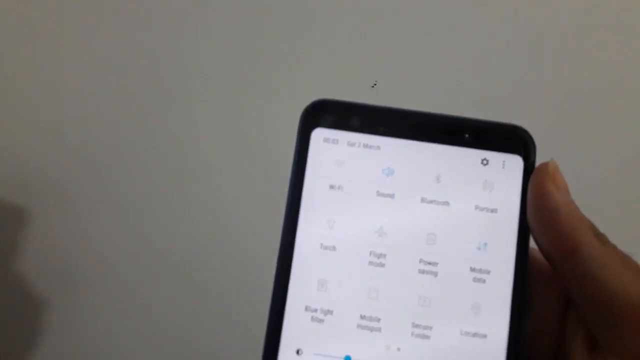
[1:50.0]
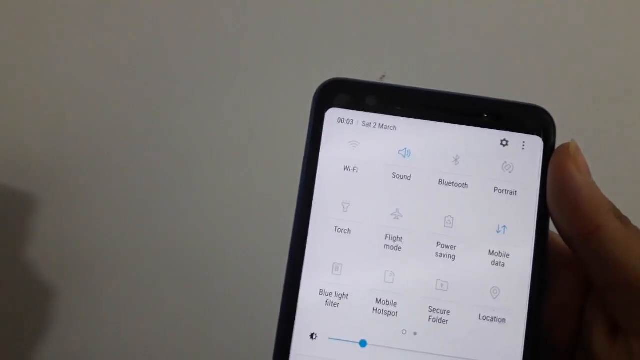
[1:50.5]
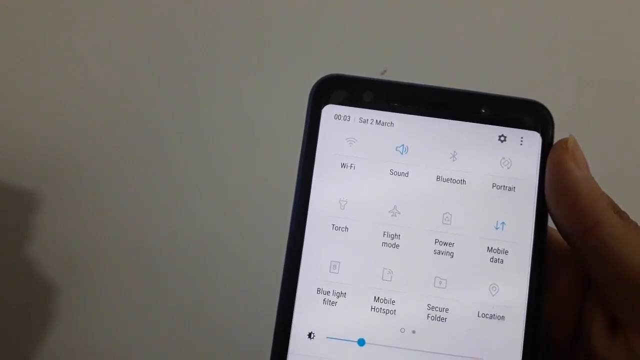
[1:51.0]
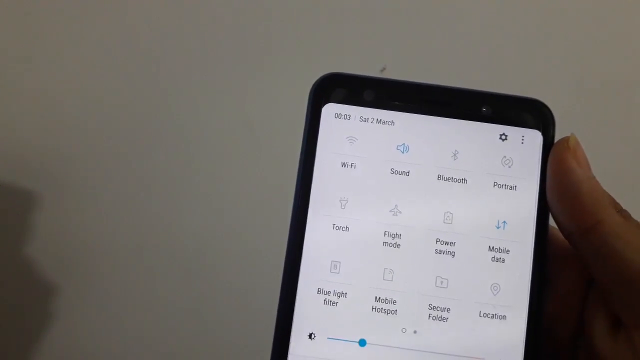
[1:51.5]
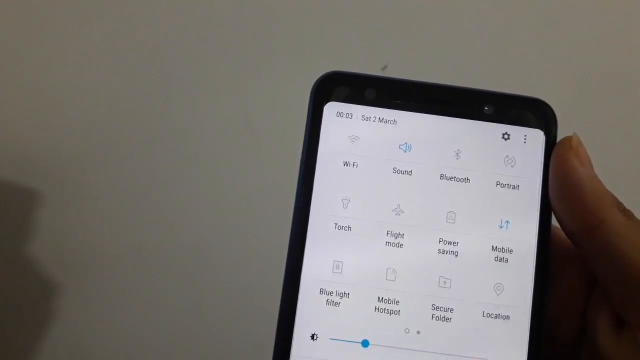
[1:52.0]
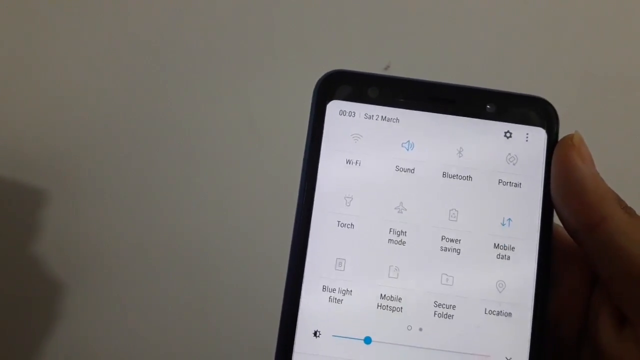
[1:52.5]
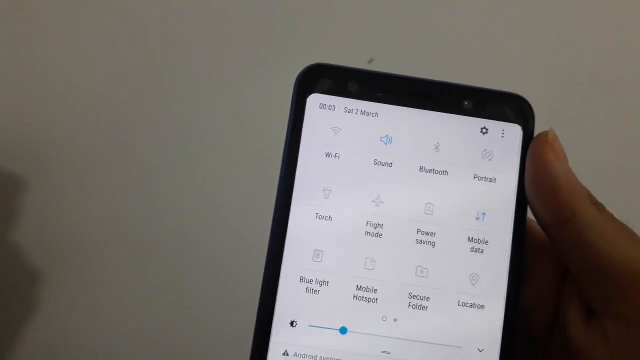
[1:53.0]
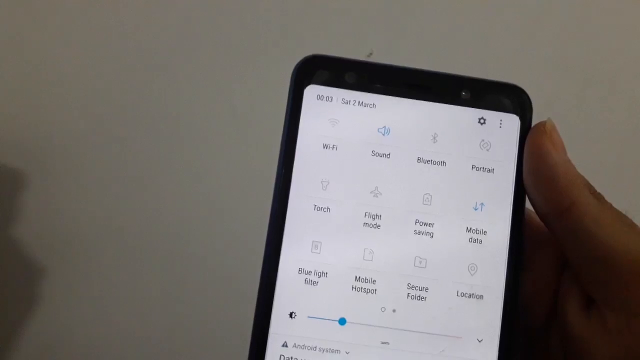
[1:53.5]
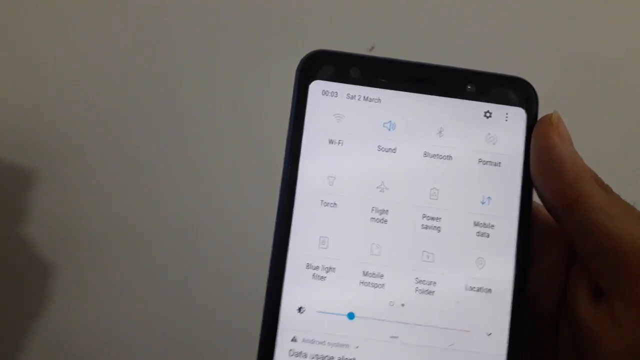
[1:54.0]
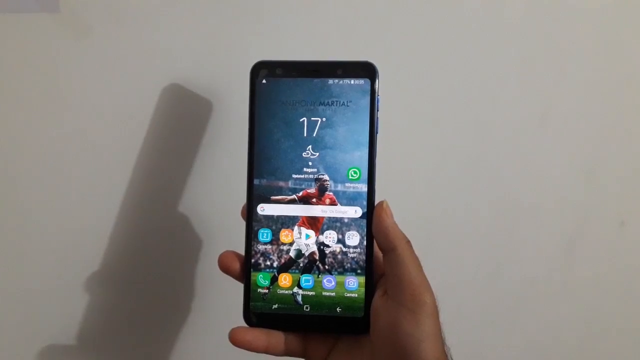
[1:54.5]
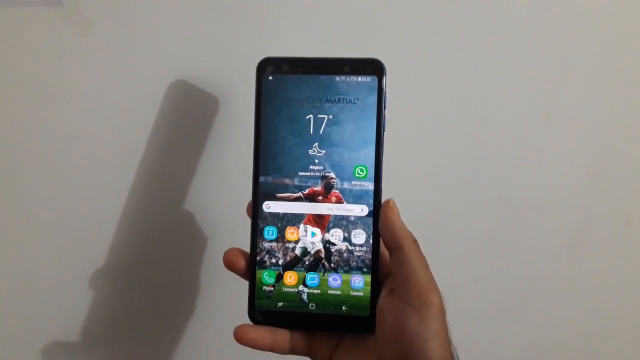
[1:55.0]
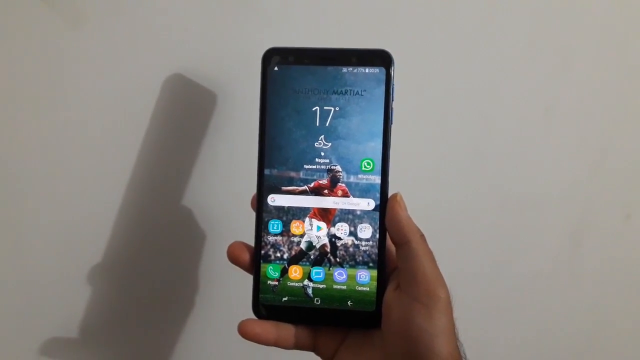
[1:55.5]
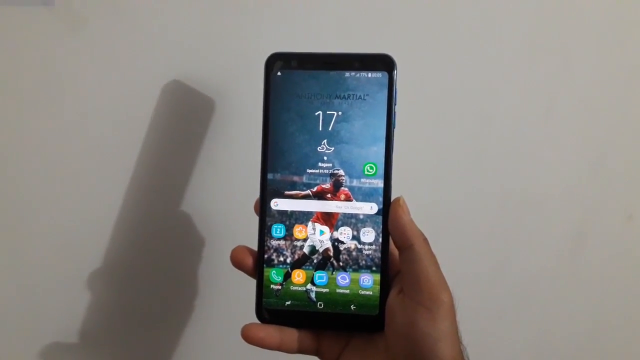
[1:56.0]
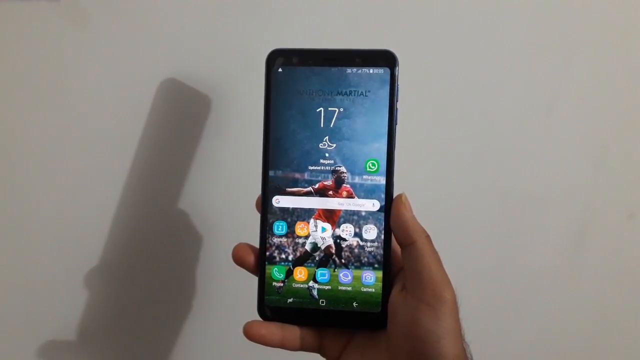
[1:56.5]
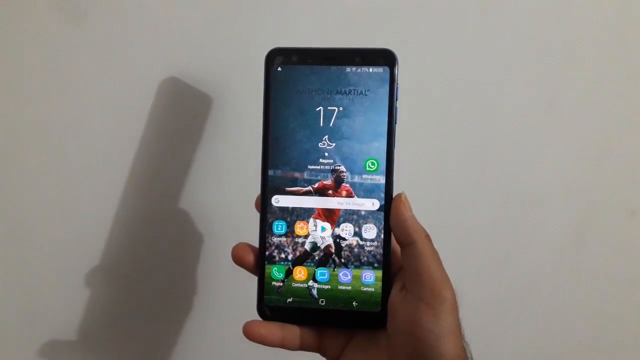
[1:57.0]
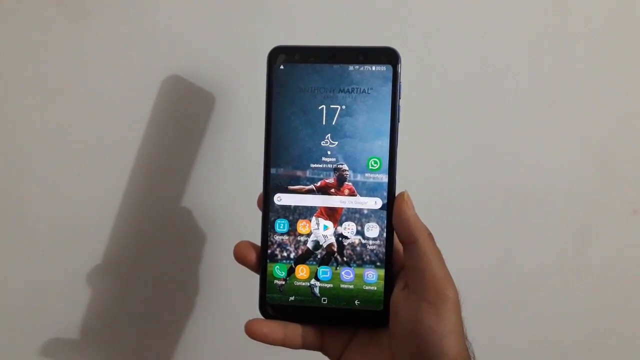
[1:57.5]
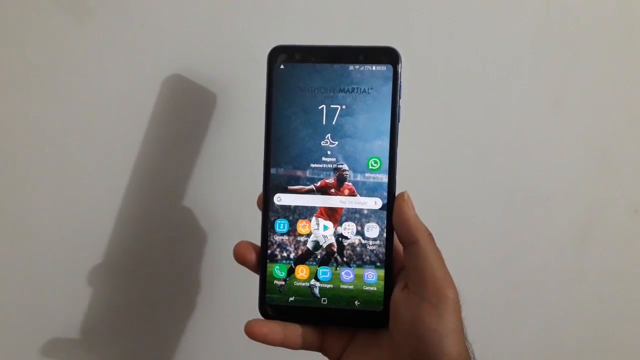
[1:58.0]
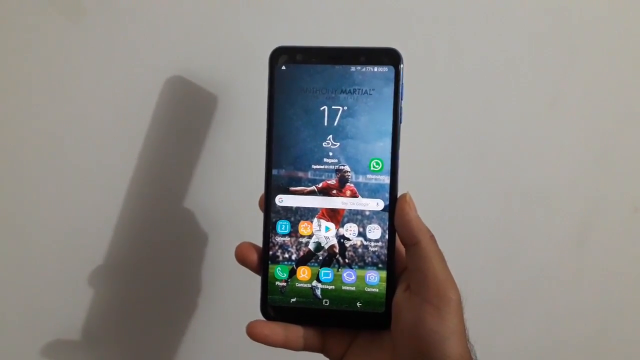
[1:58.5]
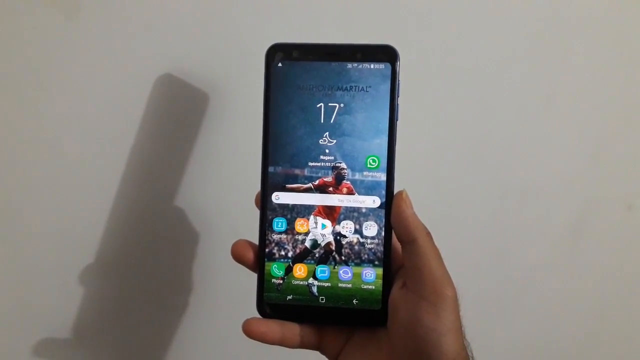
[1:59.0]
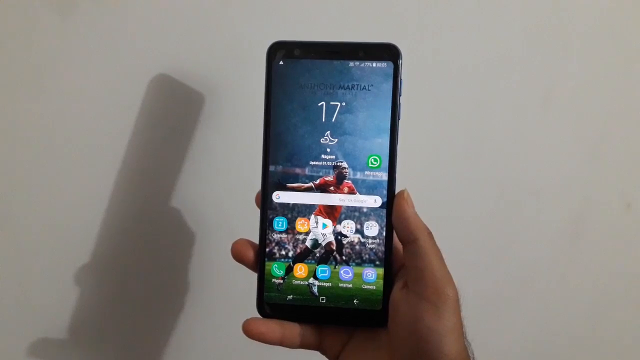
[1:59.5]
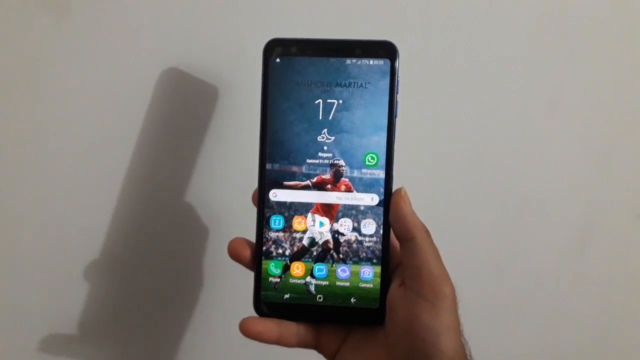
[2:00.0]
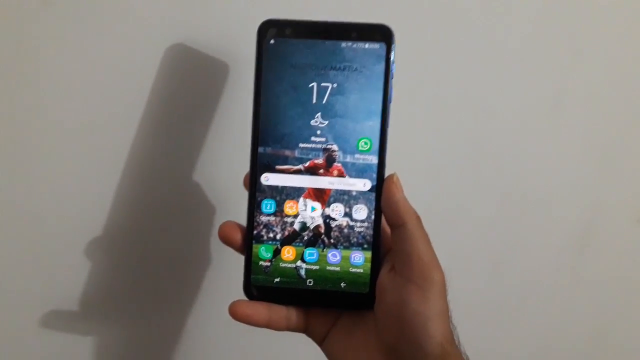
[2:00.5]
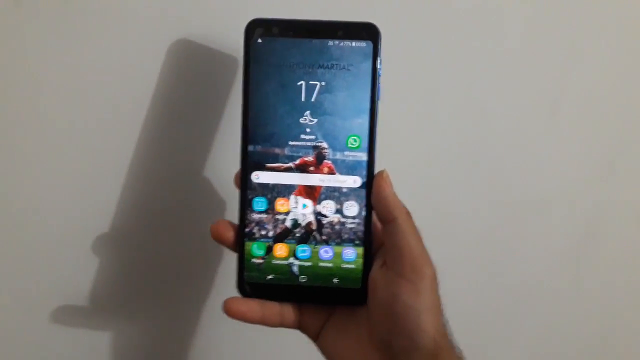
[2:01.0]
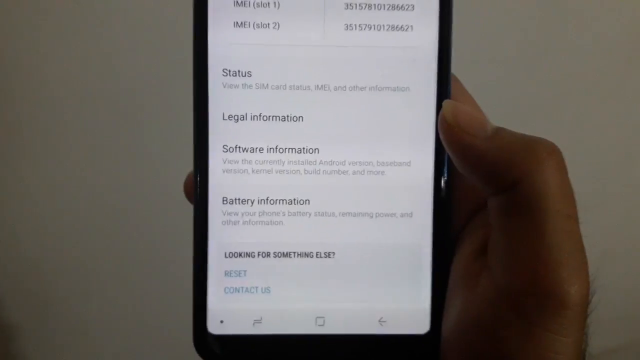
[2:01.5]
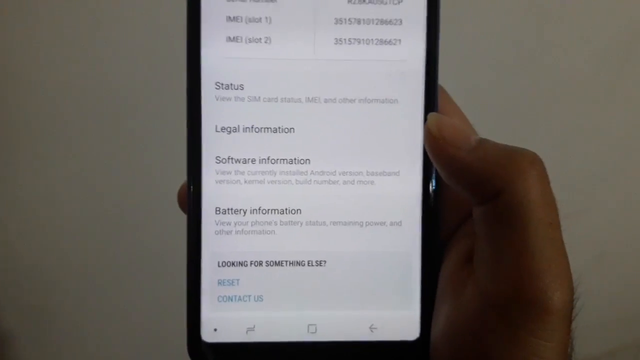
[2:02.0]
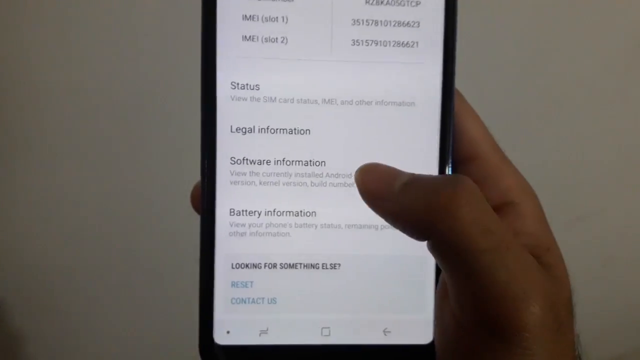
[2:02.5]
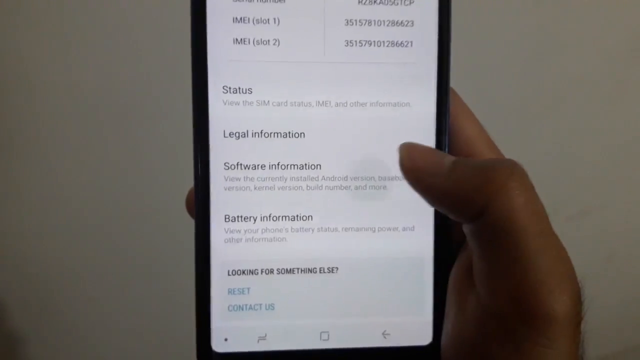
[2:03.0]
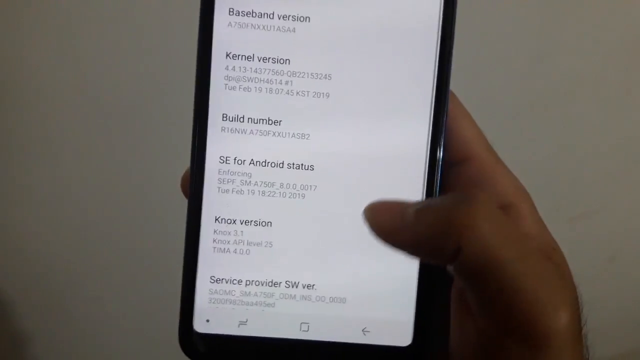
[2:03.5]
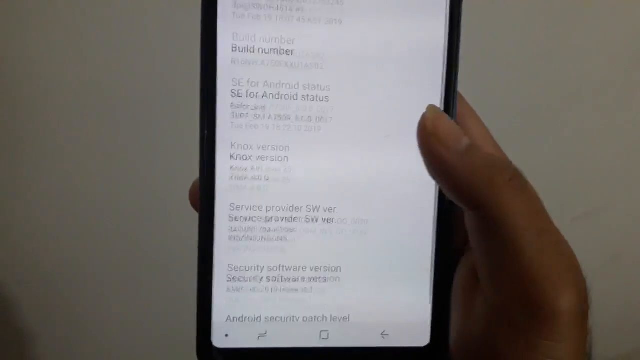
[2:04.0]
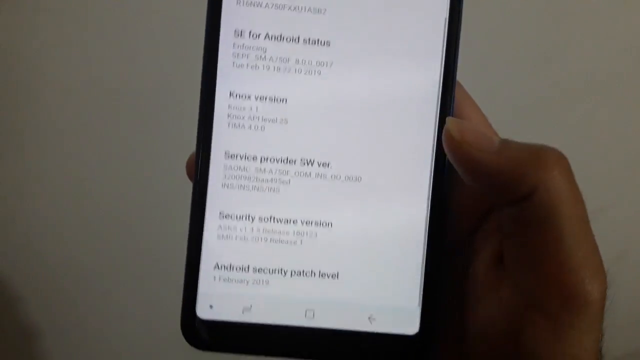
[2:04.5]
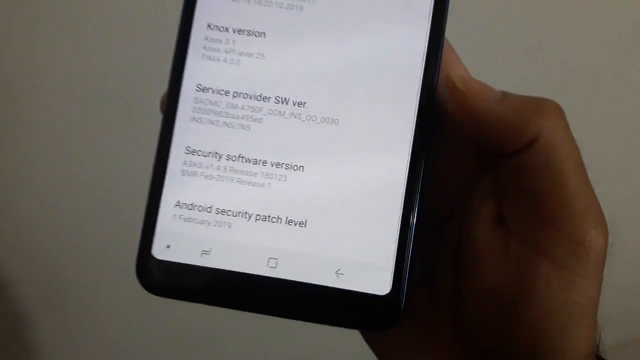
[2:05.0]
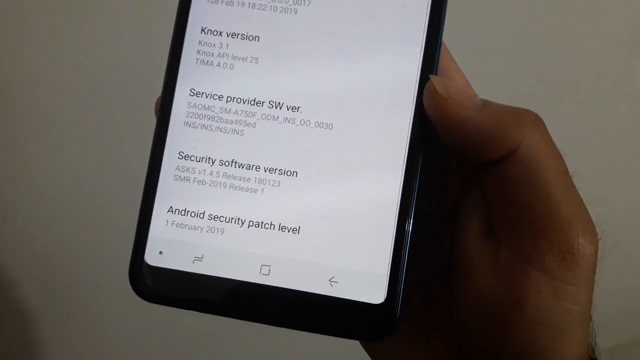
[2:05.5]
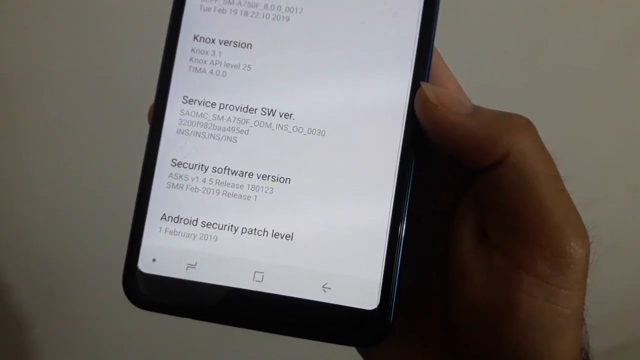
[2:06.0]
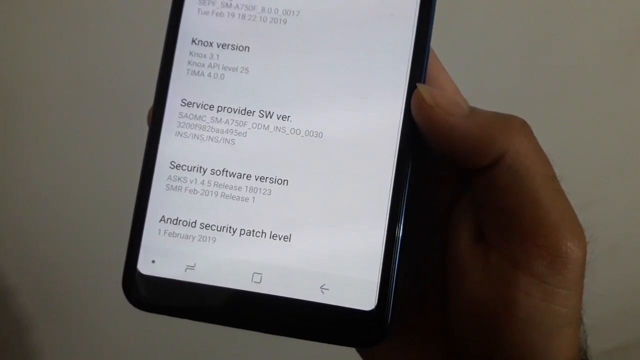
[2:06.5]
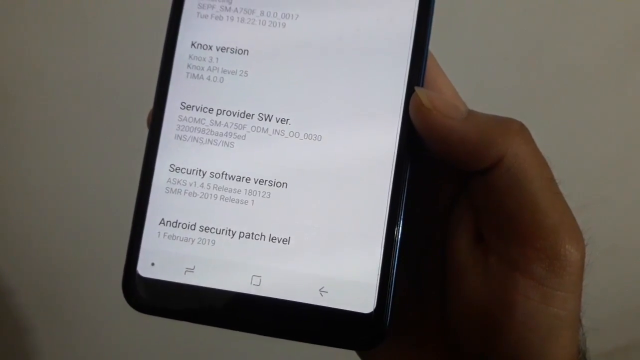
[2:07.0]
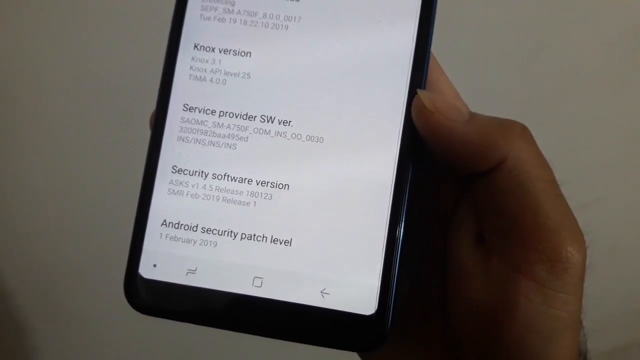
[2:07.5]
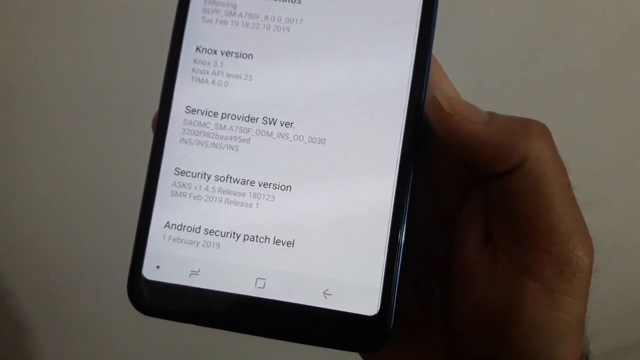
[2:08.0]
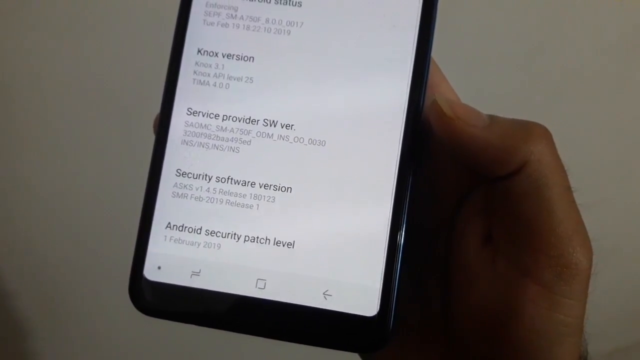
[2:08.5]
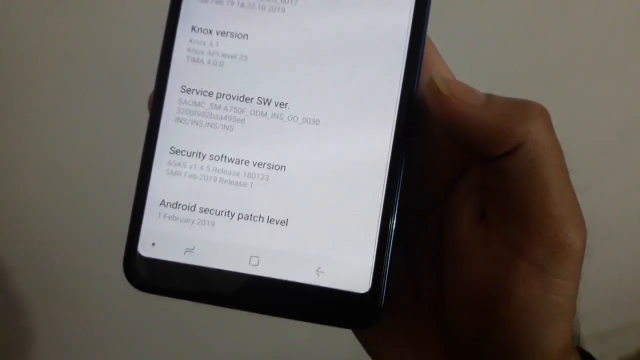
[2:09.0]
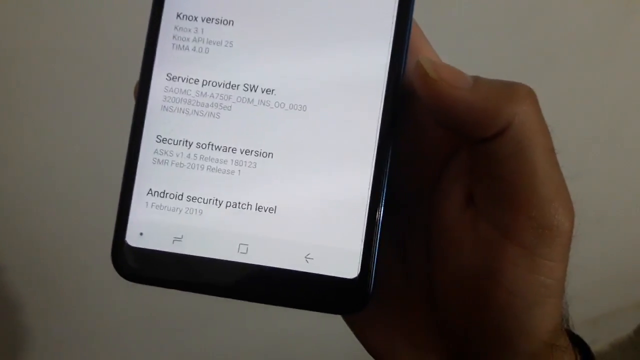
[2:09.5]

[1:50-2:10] A Samsung phone is seen up close, held by a woman between her thumb and two fingers. Some information appears, and then her screensaver: a soccer player in white shorts and a red jersey. The phone's face says "17 degrees," with some apps at the bottom. She holds up the phone so it can be seen clearly, and a shadow of the phone and her hand falls on the wall. She now rests the phone on her pinky, which she was not doing before. Holding it close up, she shows "status," "legal information" and "software information," clicking different things with her right thumb. She scrolls up the page, showing the security software version and other information up close.